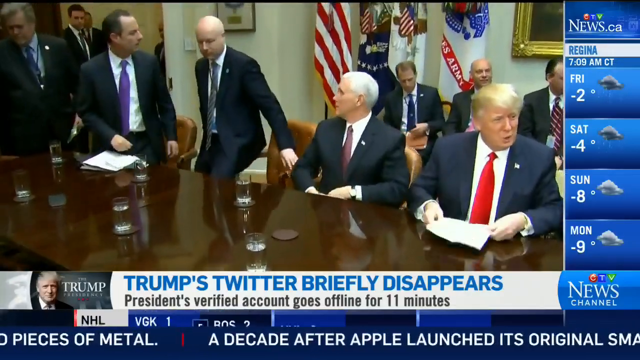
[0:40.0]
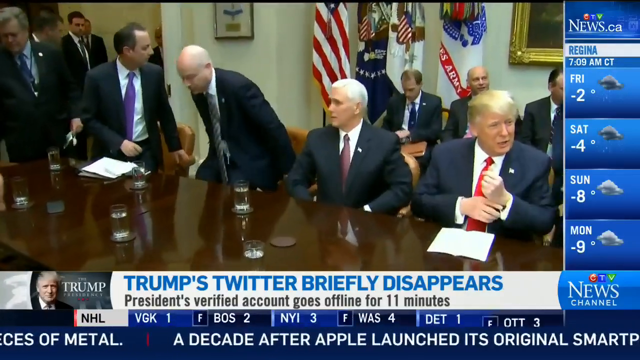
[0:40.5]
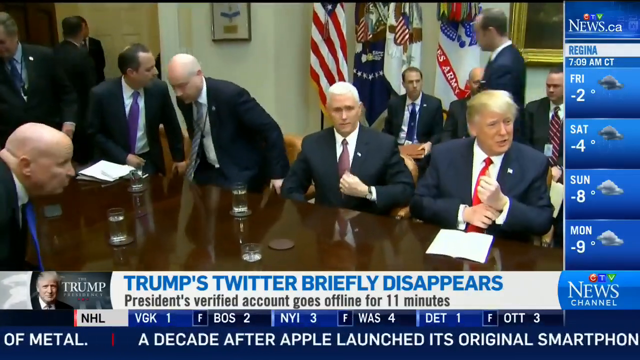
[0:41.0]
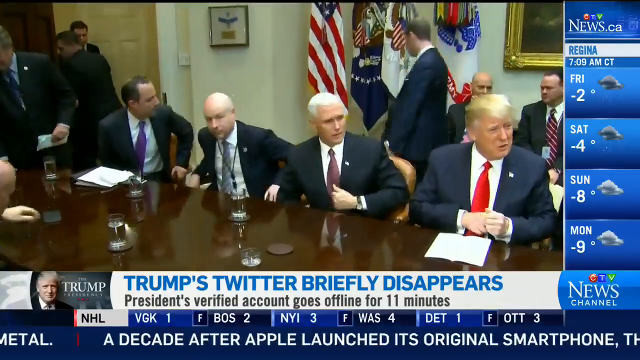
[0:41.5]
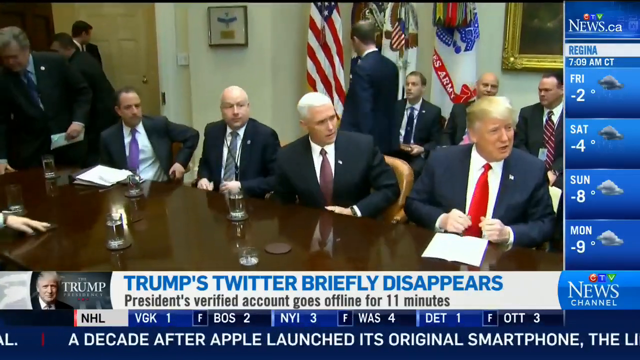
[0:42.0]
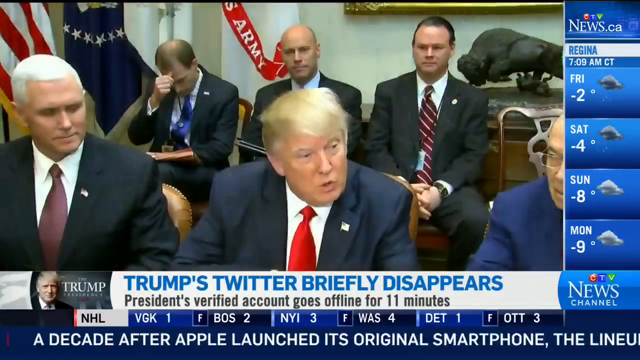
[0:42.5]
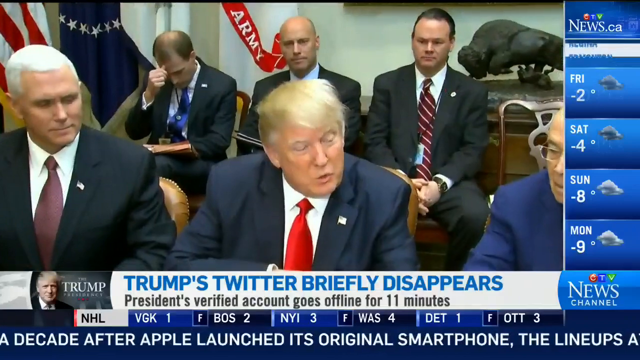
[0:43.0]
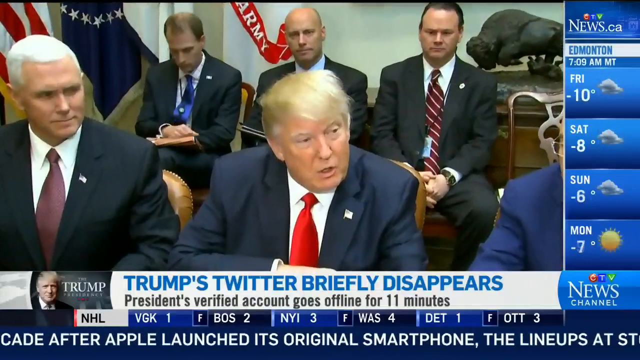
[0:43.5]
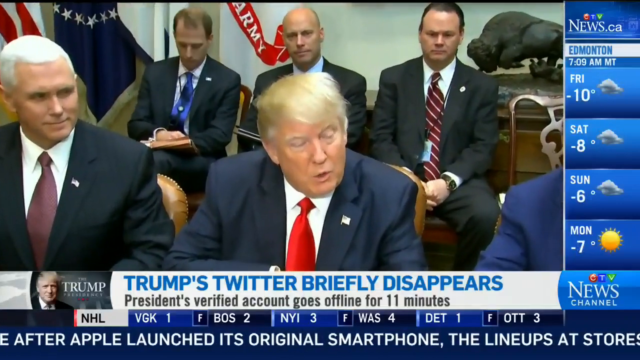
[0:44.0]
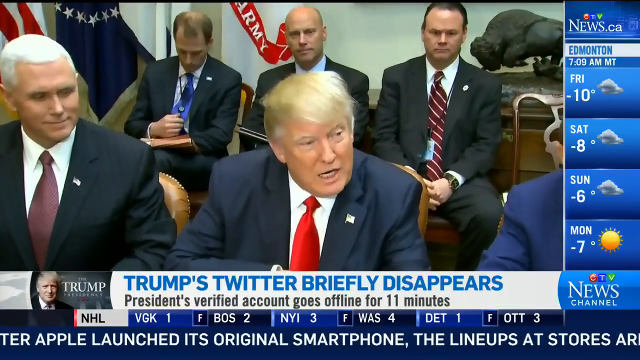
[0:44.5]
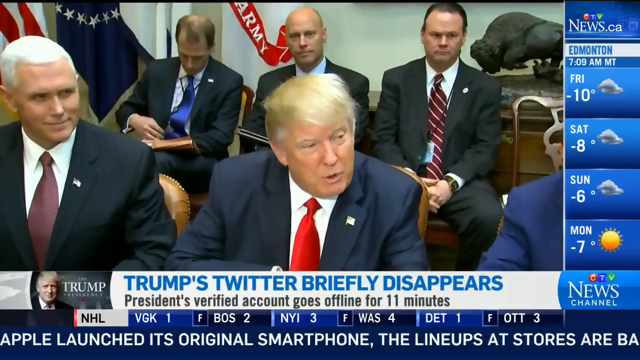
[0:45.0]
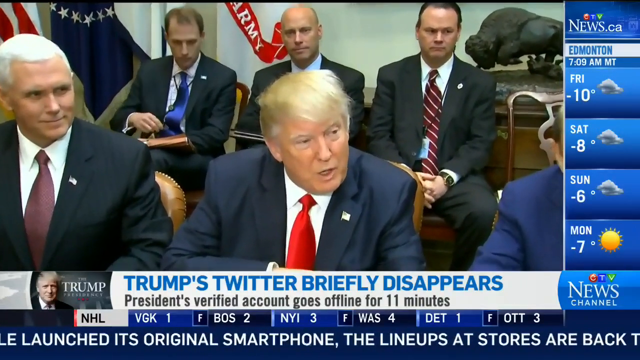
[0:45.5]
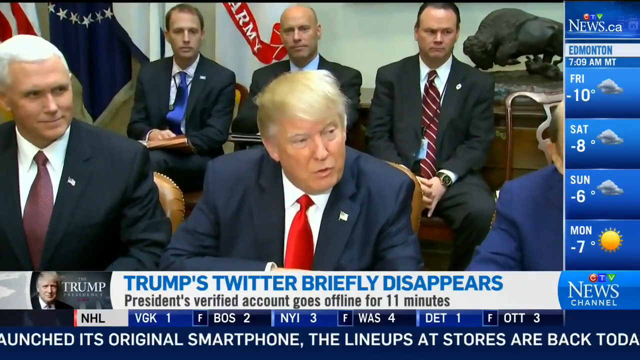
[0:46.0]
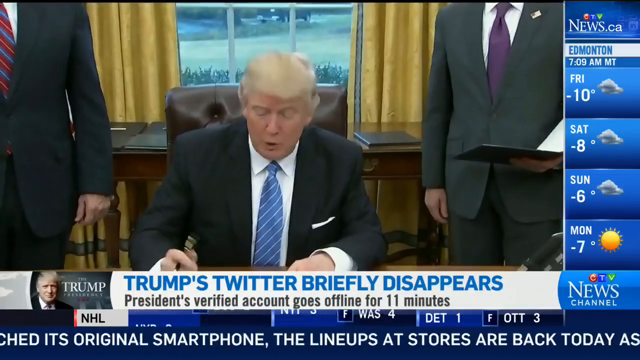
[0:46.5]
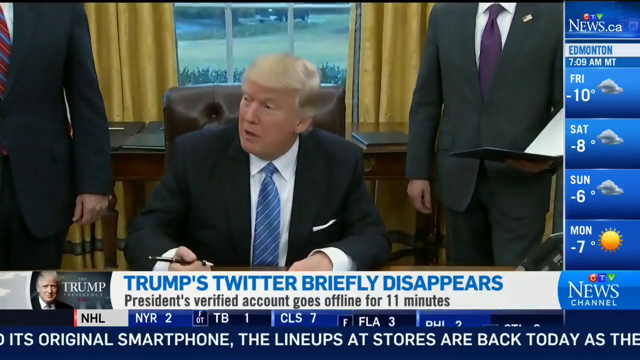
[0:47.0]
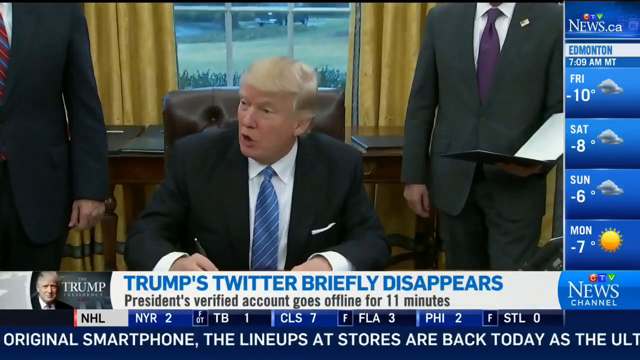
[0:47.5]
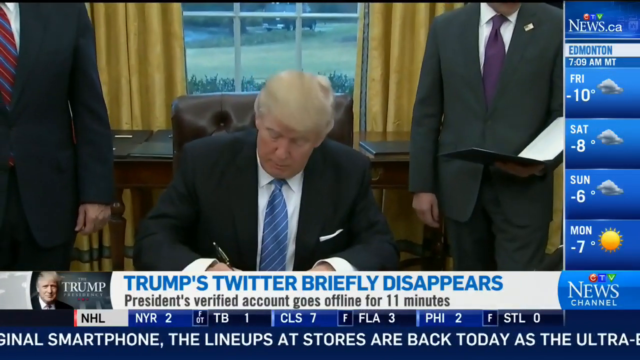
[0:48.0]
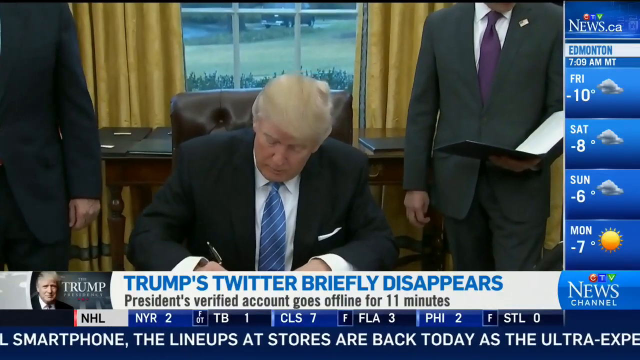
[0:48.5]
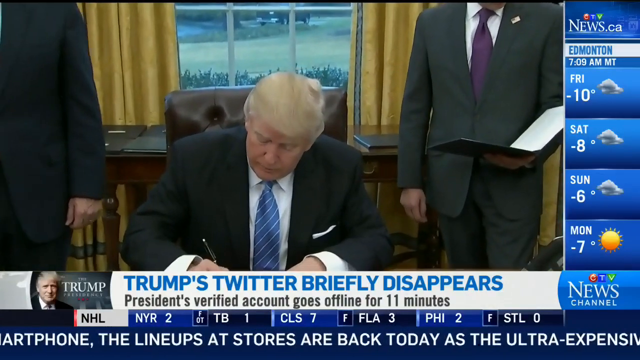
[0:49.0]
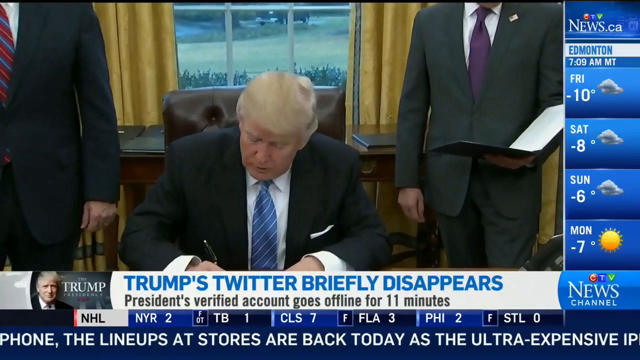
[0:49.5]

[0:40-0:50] The meeting continues with everyone seated, and Trump addresses the room. For a few seconds the men are shown congregating together, and then the shot focuses on Trump and Pence, with three men sitting behind them. Trump wears what looks like a navy suit with a red tie and a white shirt. Pence's attire is very similar, apparently a black suit with a burgundy tie and a white shirt, and all the men wear navy or black suits. The video then cuts to Trump in the Oval Office, apparently on another day, wearing a black suit with a blue tie. He sits in a brown leather chair, signing something, with gold curtains in the back of the image and the window open. A couple of men appear to be standing around him, but their faces are not visible. The on-screen elements remain at the bottom: hockey scores show up again, and the news crawl mentions something about Apple and the smartphone. The weather report is still on the side and has changed to a town called Regina.